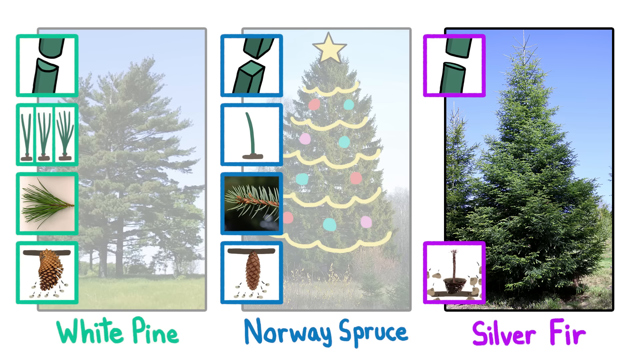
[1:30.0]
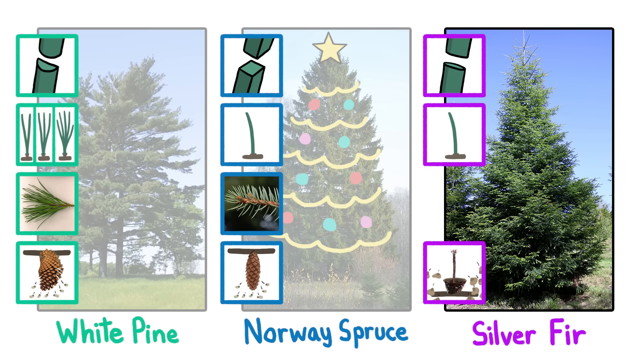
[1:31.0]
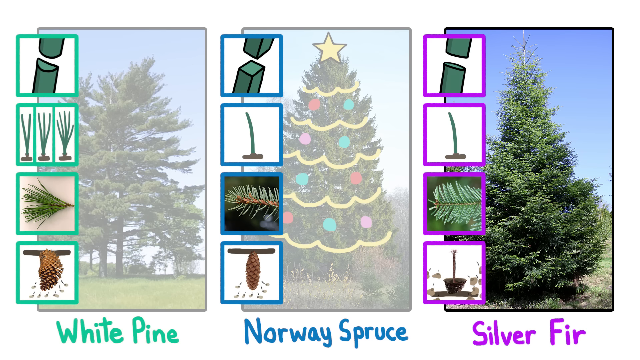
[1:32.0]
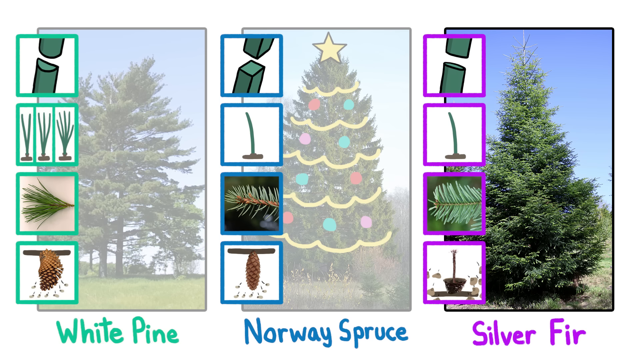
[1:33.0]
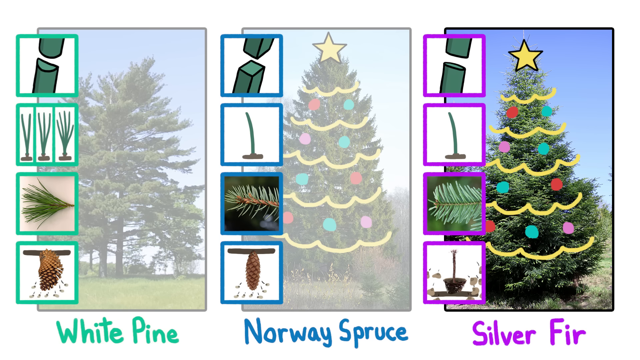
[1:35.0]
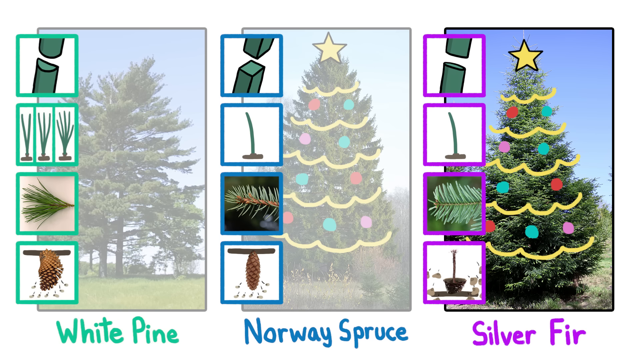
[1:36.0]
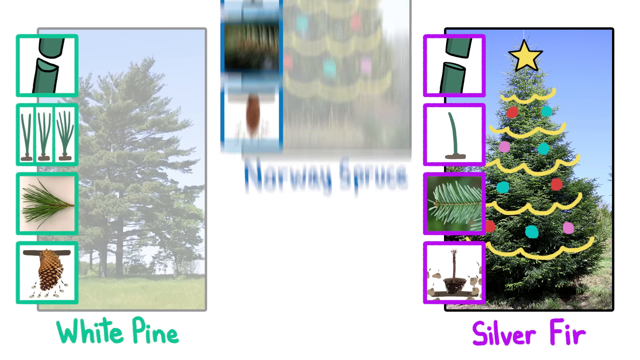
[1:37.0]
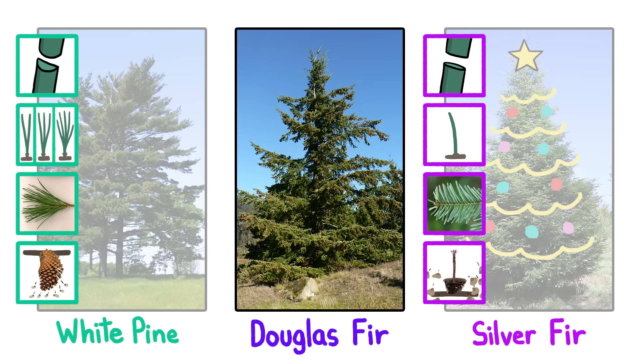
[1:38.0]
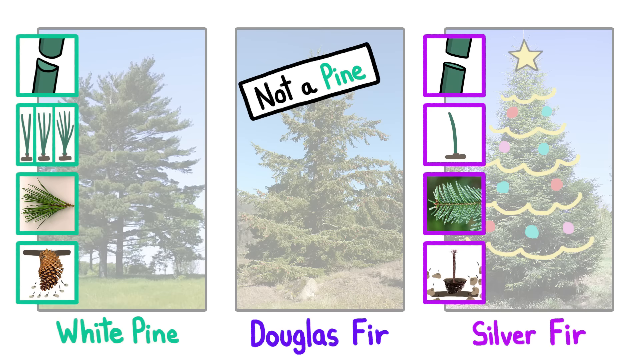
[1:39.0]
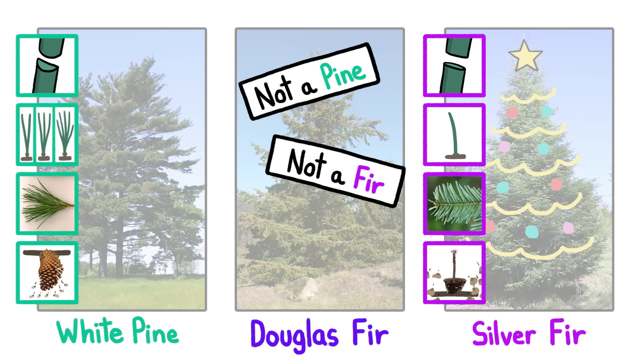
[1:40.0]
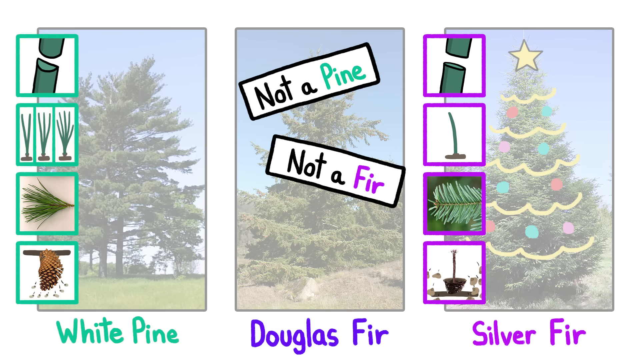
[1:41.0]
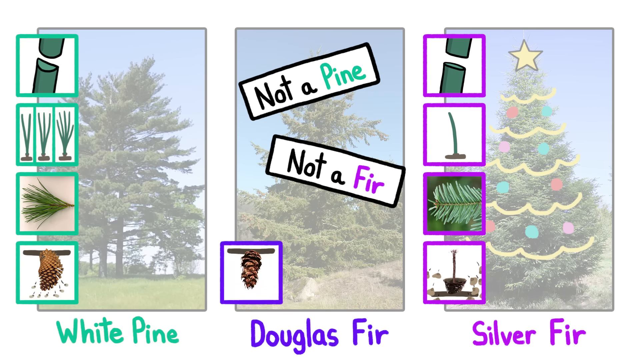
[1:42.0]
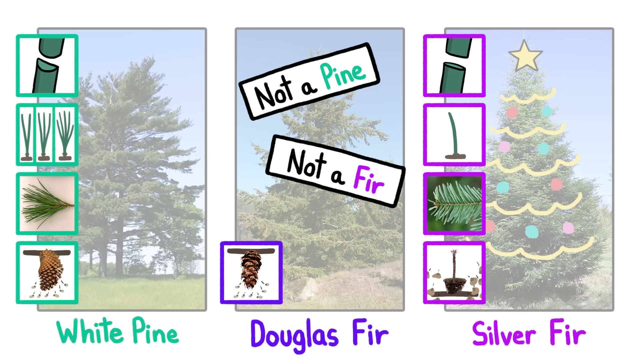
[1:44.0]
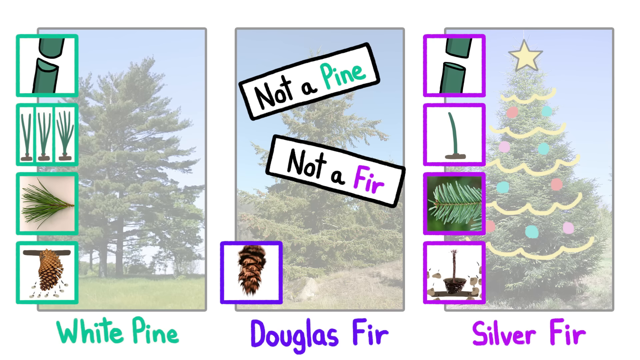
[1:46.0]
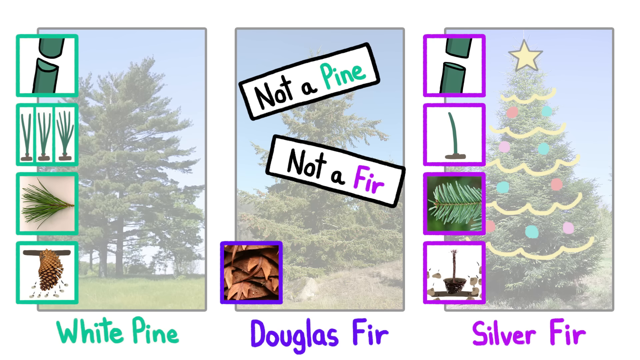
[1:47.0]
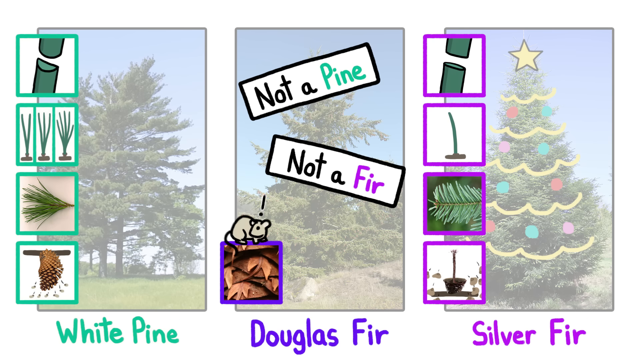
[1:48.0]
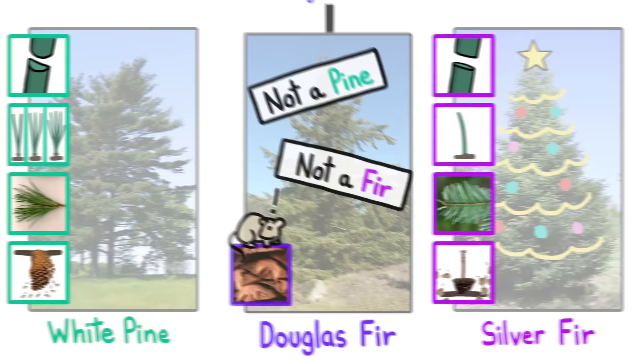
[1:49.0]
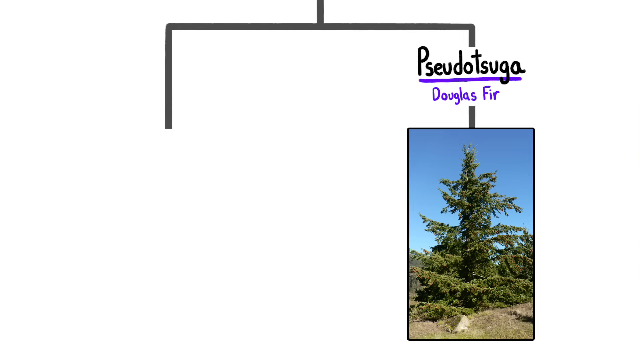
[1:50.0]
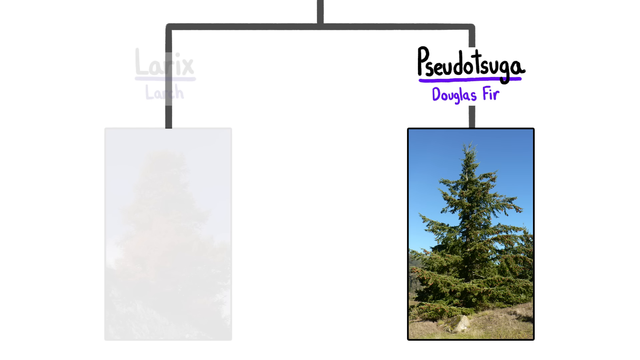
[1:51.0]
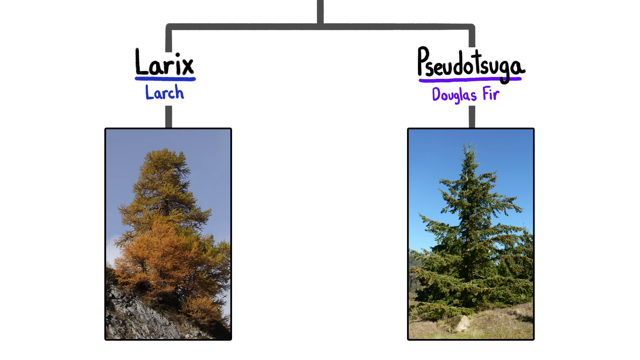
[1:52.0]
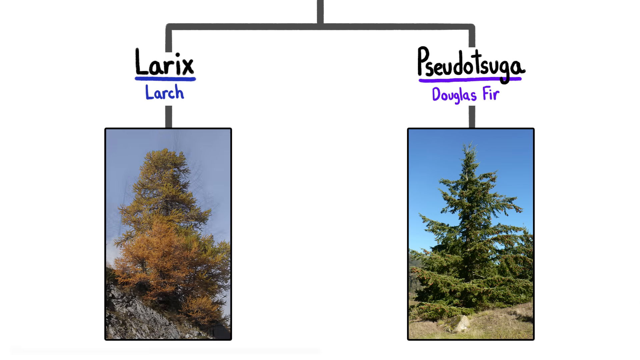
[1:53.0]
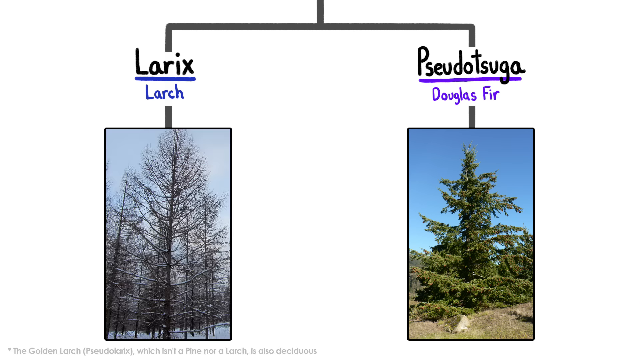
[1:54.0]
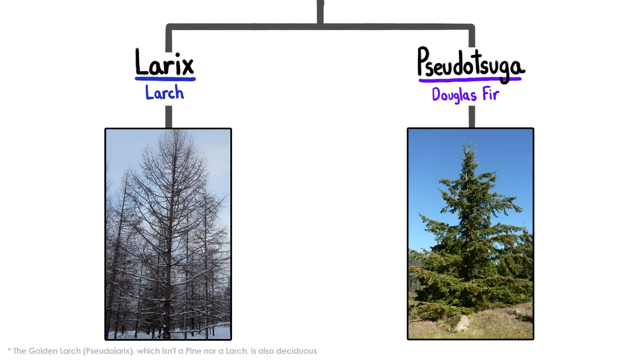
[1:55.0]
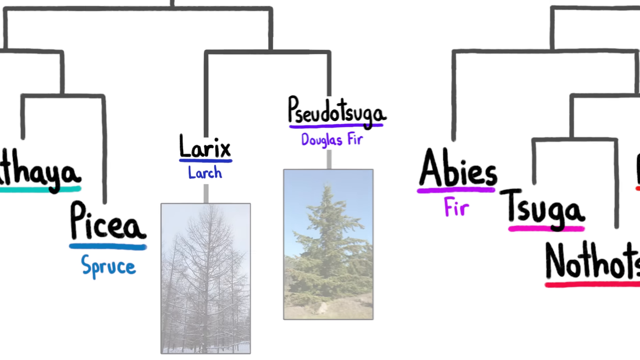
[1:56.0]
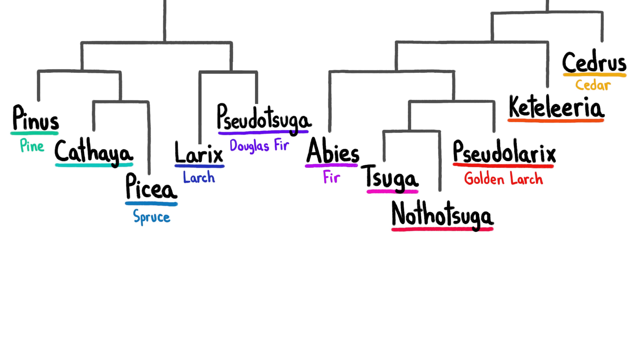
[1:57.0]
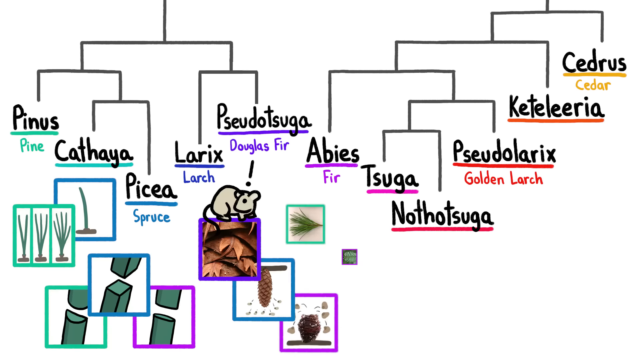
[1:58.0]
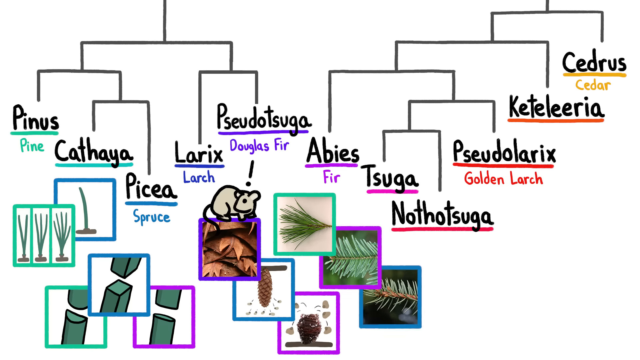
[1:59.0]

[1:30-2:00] A white pine, a Norway spruce and a silver fir appear on screen. The image of the white pine and the image of the silver spruce are grayed out, as are the images beside them showing the shape of the needles, the arrangement of the needles, how the cones drop their seeds, and the shape of the cones on the tree. The last picture, labeled "silver fir", is not grayed out. At the top, the shape of its needles begins to be shown, similar to the pine but not identical, and not matching the spruce either. The location of the needles and the number of needles in each cluster are also shown, along with the fact that they do not have cones.